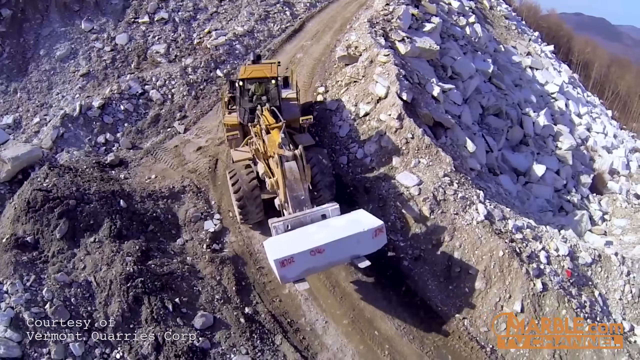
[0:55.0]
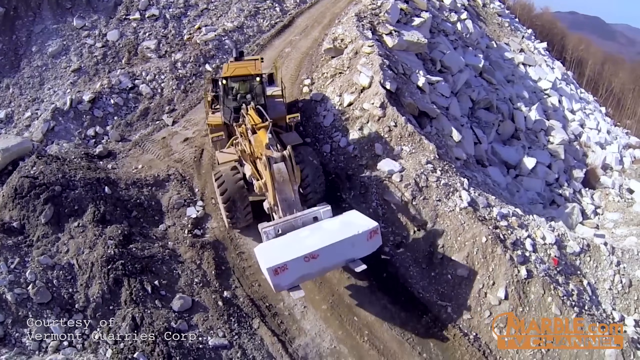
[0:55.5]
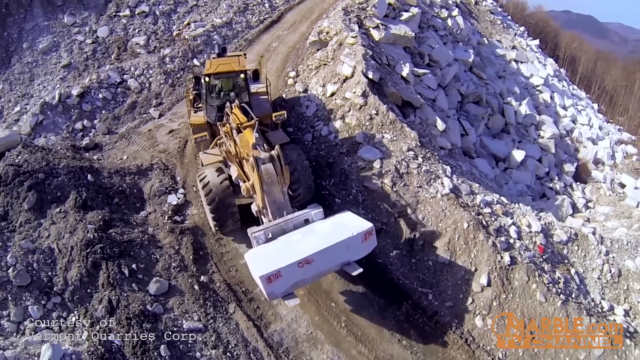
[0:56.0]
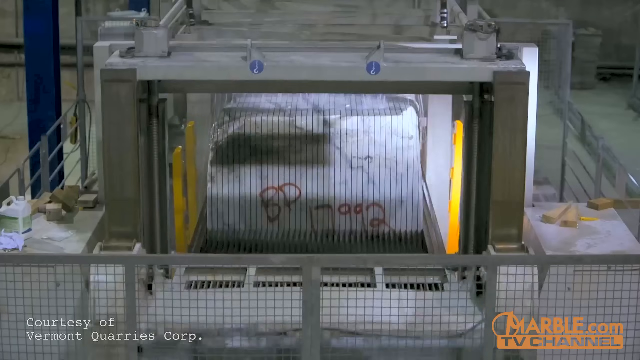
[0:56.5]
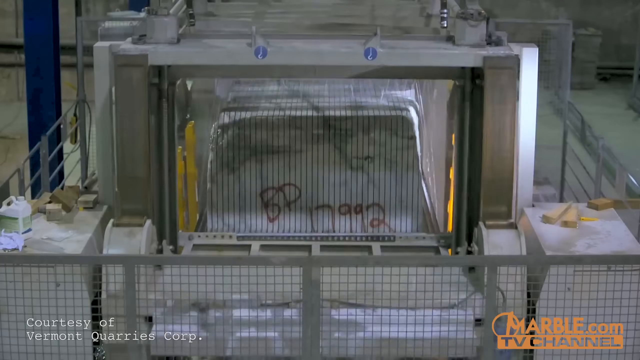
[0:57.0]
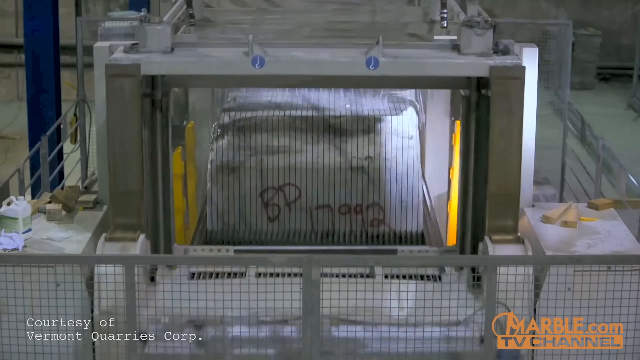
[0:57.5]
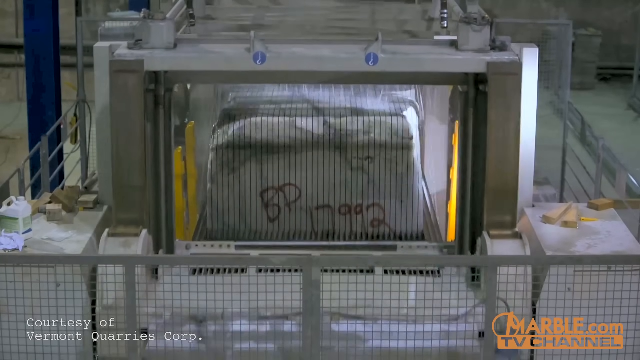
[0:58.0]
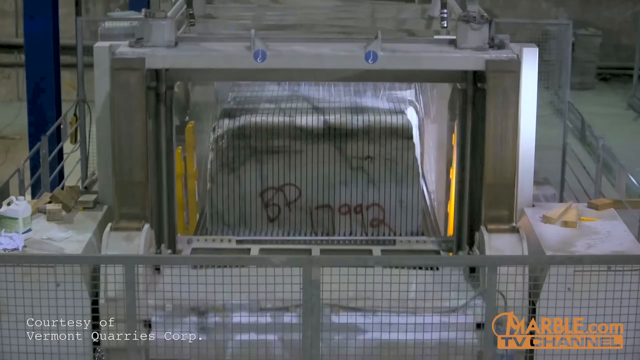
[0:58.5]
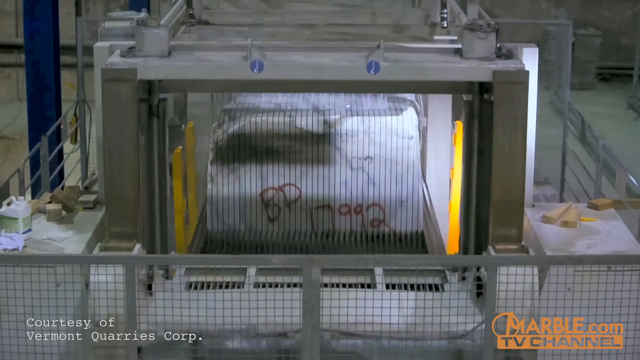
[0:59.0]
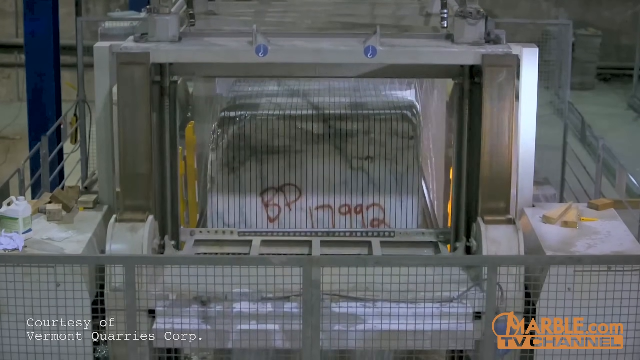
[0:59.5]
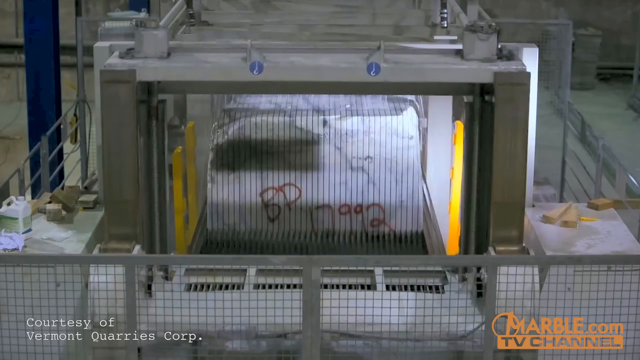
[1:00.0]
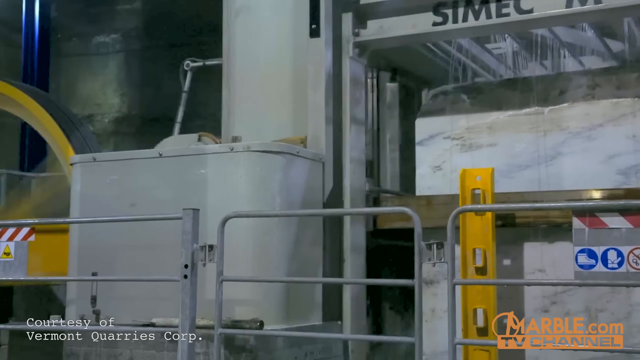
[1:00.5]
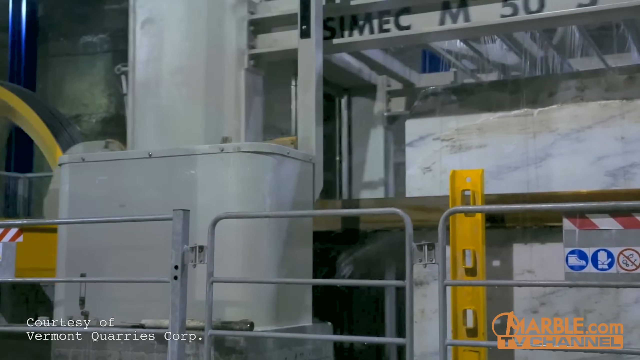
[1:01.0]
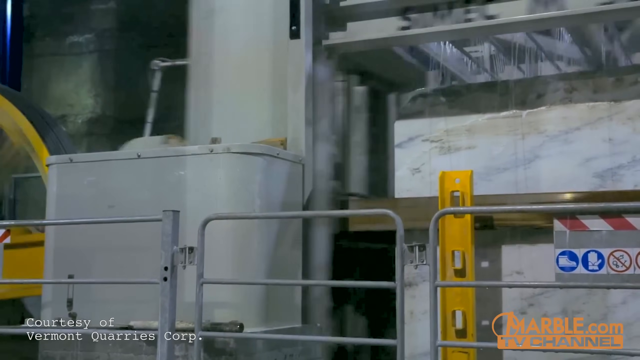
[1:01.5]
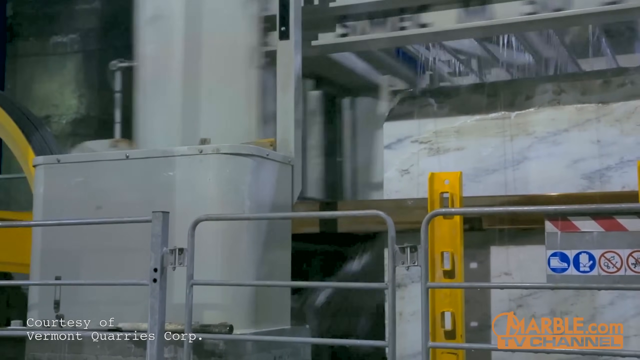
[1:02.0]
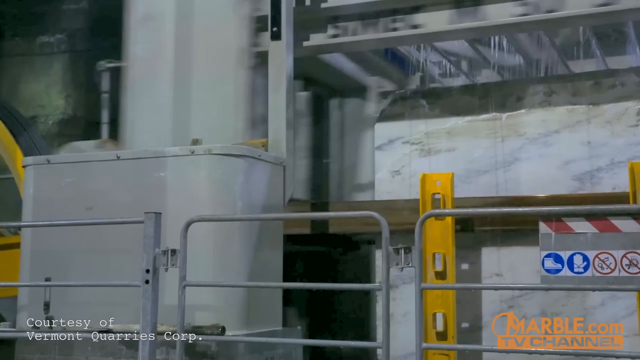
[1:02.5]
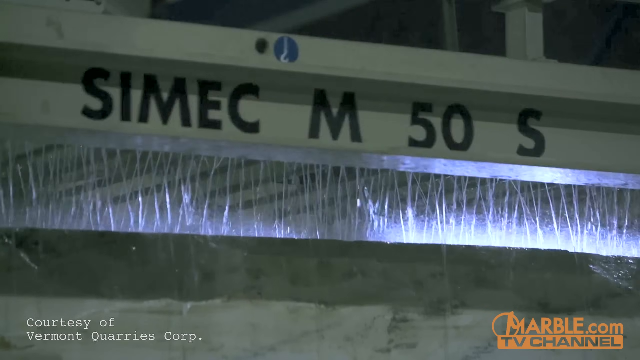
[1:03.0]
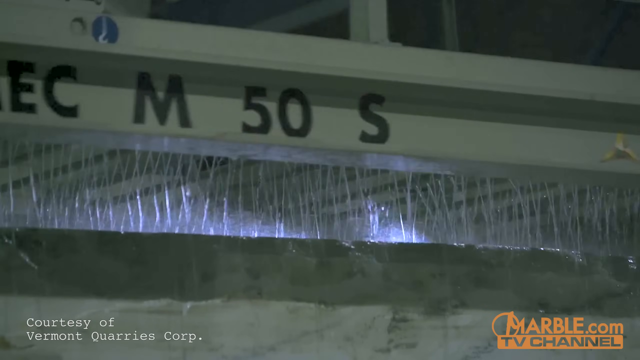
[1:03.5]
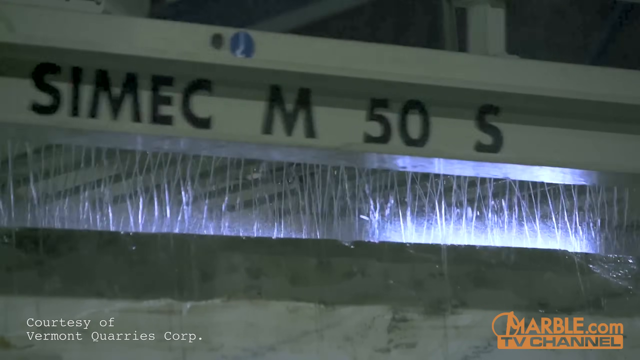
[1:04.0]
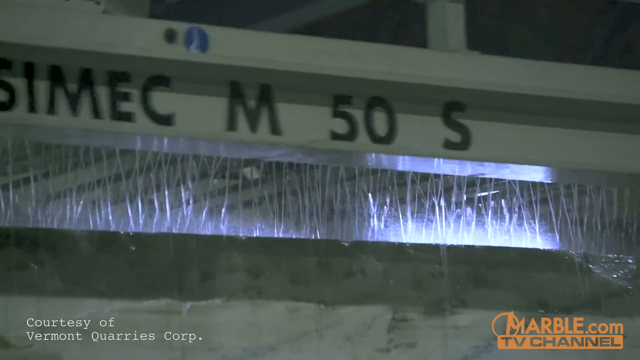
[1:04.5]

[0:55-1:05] A close-up shows the forklift traveling down the steep road, holding a big slab of white rock at its very front. Next is a close-up of some kind of machine with what looks like a white package reading "BP12992" in red letters. The machine moves back and forth over the front of it and has kind of a wire grate at the front. The video then shifts to what looks like the same machine from a profile view, moving in the same back-and-forth motion. Then a white bar is seen moving back and forth over little white fibers.